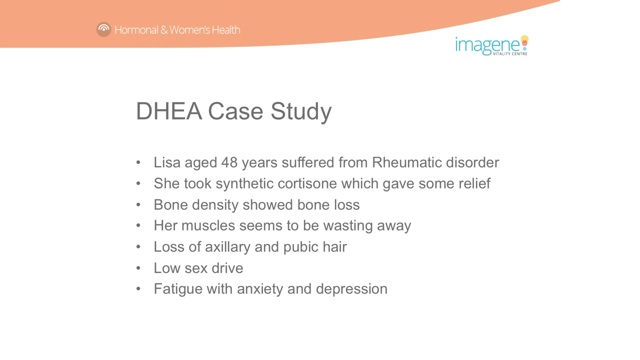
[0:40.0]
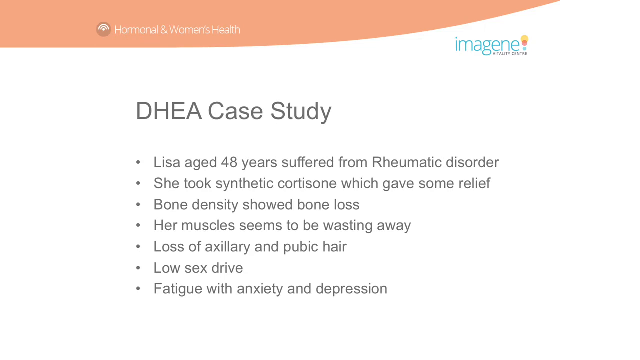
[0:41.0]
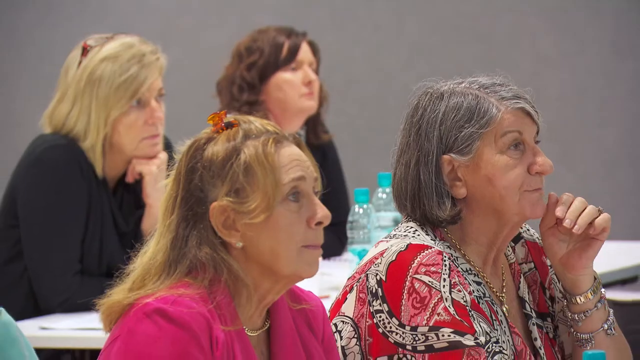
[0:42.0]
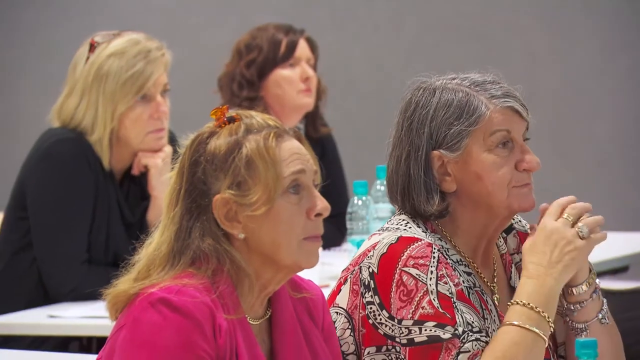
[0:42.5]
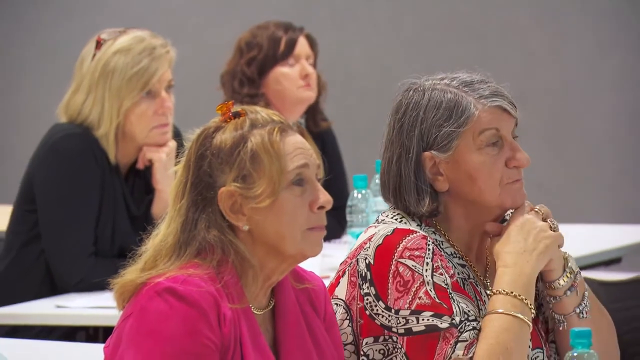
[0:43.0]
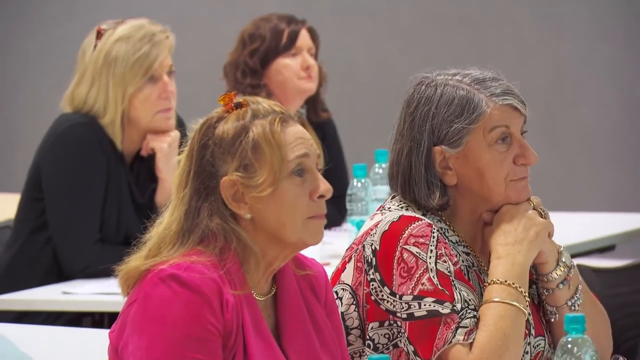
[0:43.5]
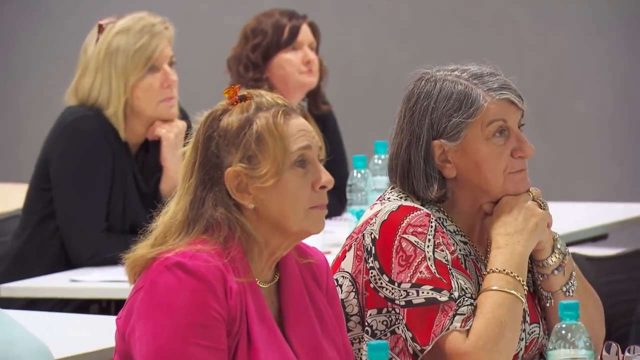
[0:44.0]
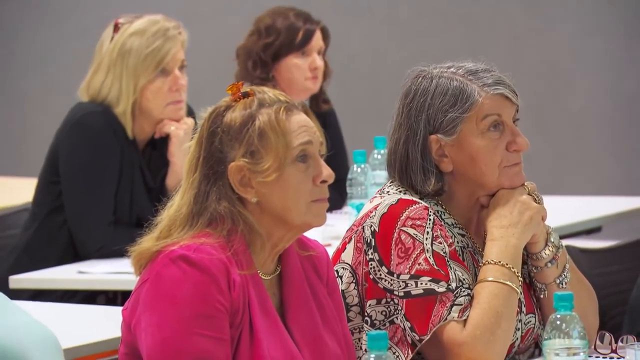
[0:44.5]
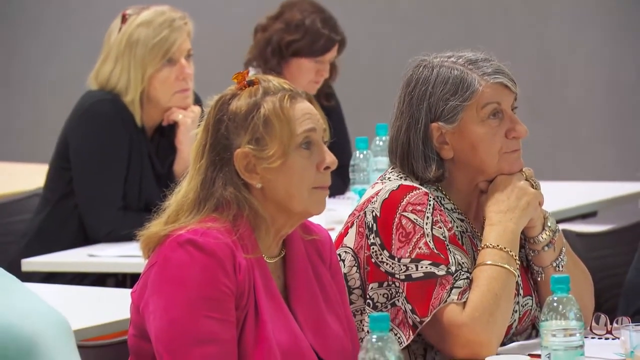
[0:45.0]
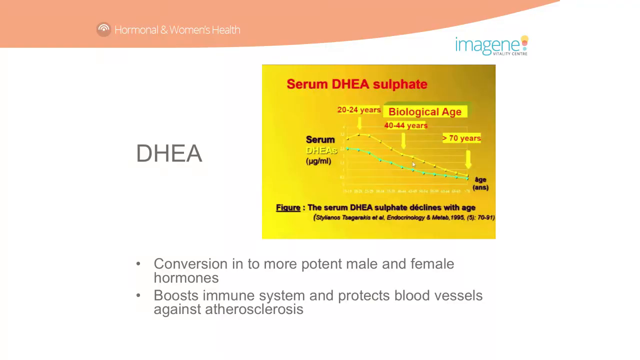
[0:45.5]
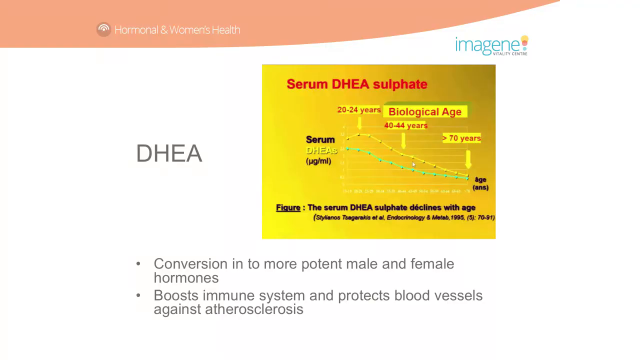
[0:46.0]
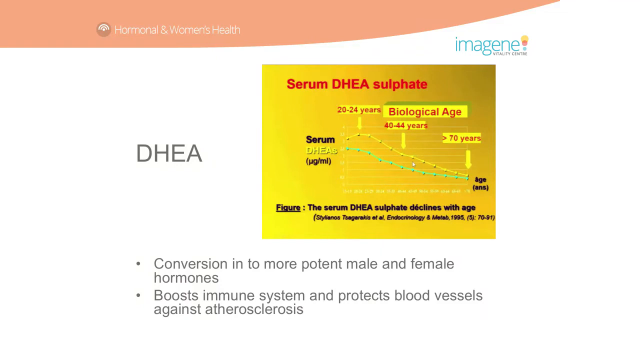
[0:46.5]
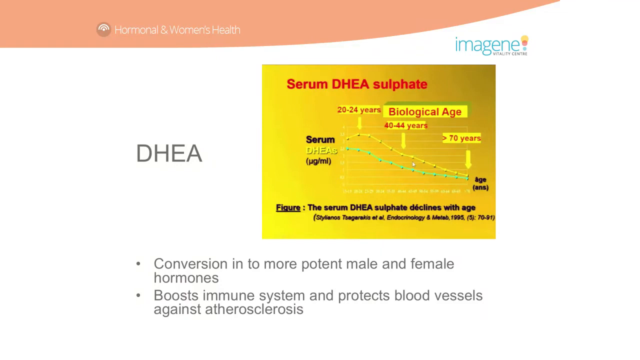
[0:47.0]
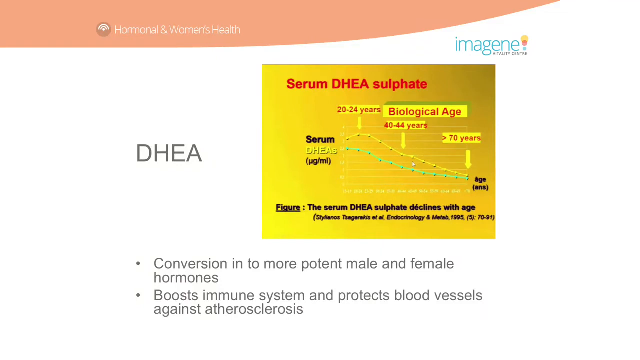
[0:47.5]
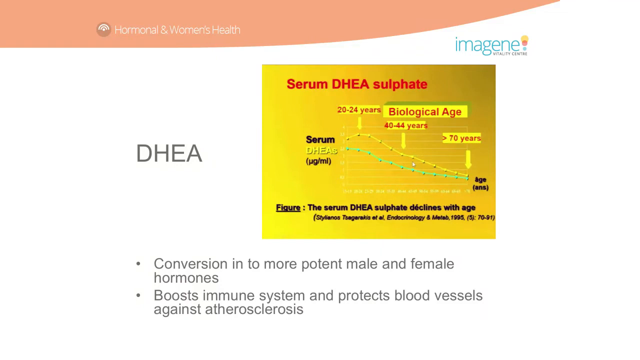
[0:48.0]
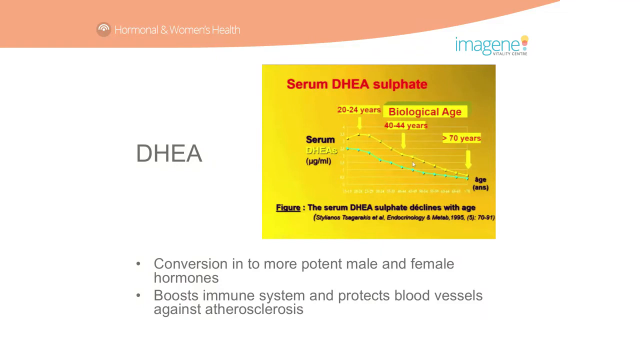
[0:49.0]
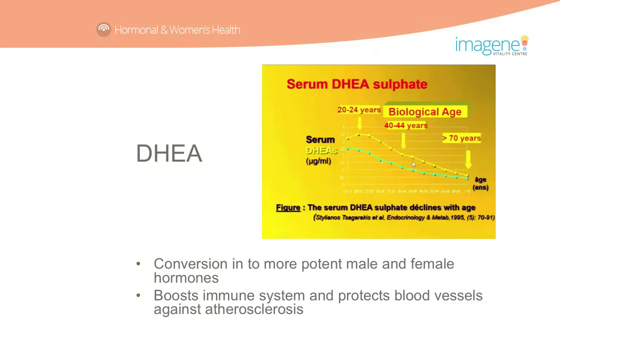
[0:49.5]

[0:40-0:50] The "DHEA case study" slide is still shown on a white background, with its bullet points: "Lisa, age 48, suffered from rheumatic disorder", "she took synthetic cortisone, which gave some relief", "bone density showed bone loss", "muscles seem to be wasting away", and one about feeling fatigued and having depression. Women are in the audience of this medical presentation; only women are visible. Then a rectangle pops up reading "serum DHEA sulfate", along with "boosts immune system" and "protects blood vessels".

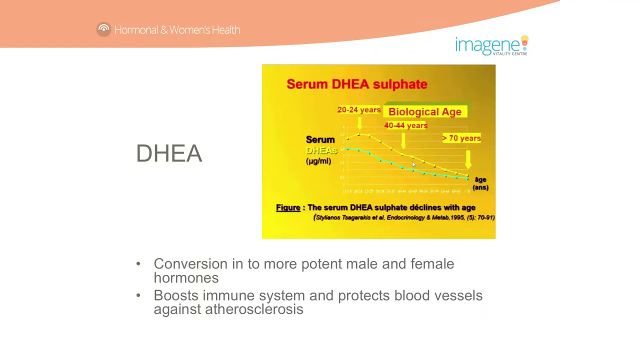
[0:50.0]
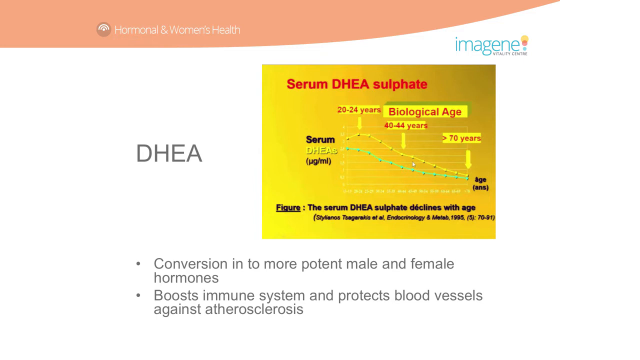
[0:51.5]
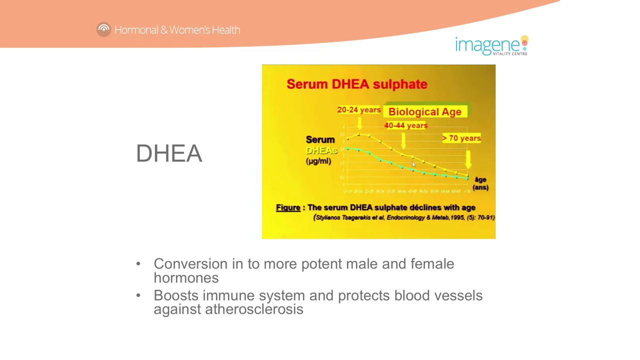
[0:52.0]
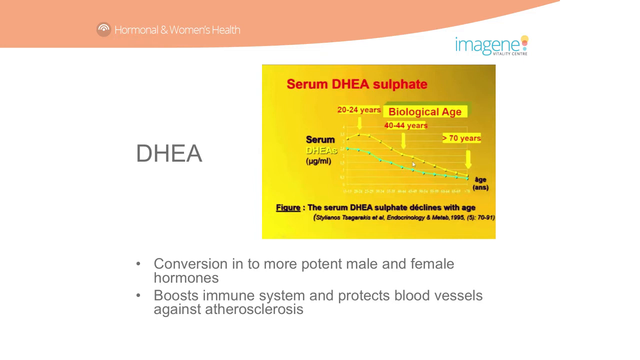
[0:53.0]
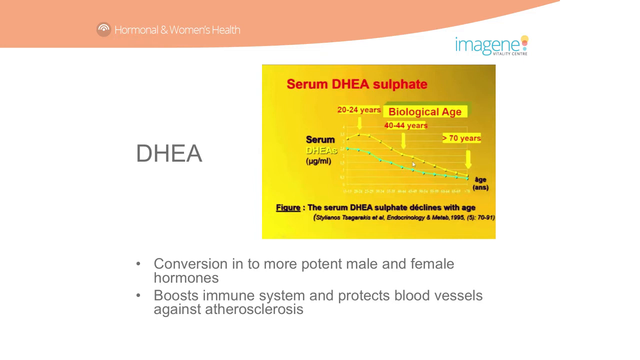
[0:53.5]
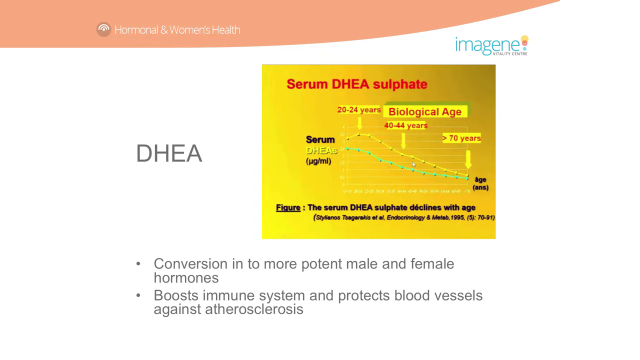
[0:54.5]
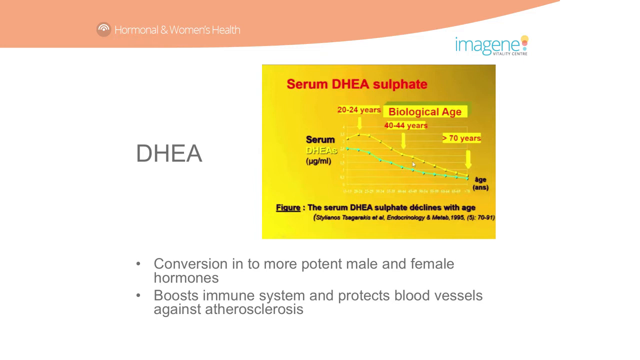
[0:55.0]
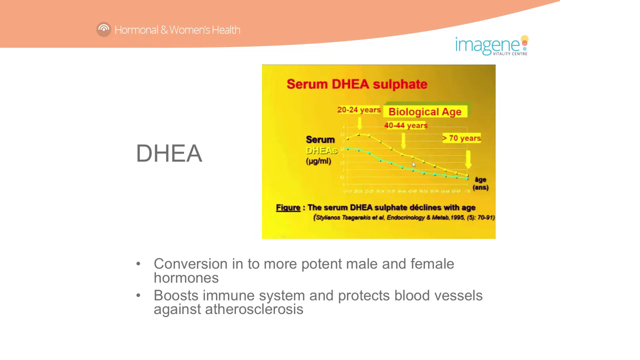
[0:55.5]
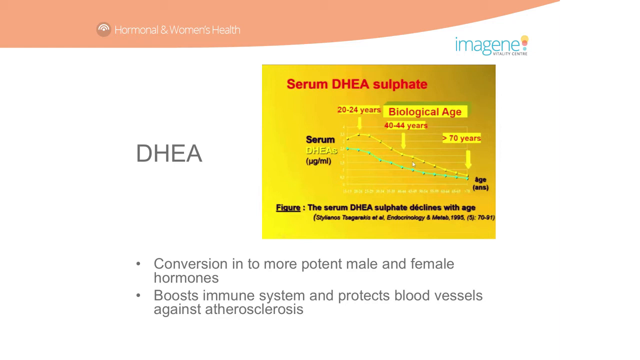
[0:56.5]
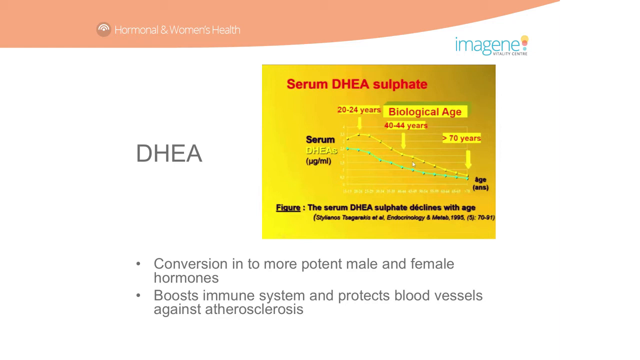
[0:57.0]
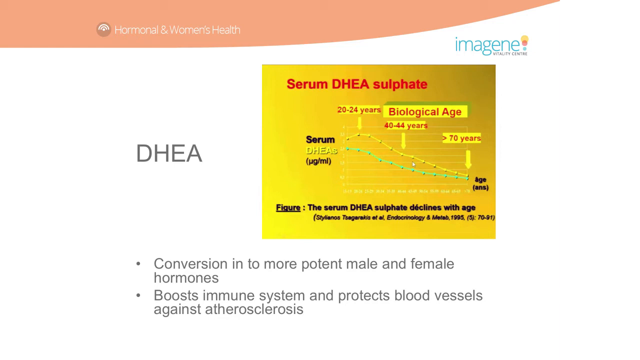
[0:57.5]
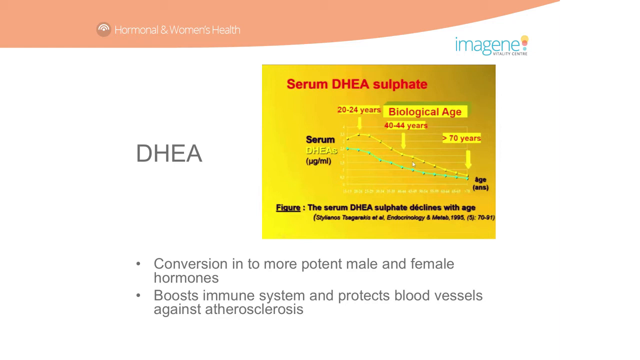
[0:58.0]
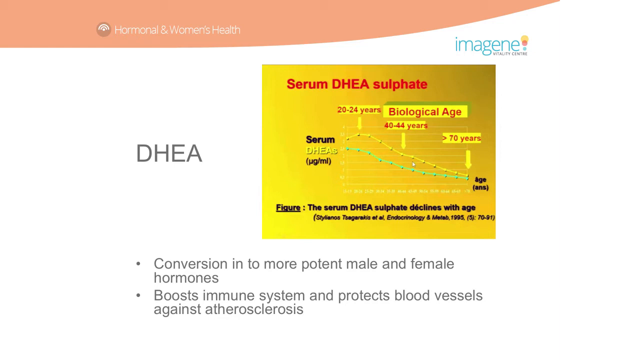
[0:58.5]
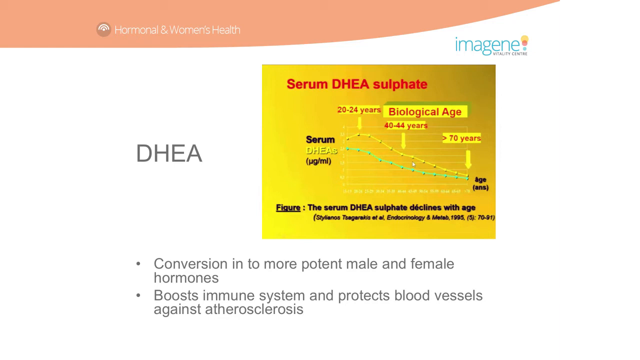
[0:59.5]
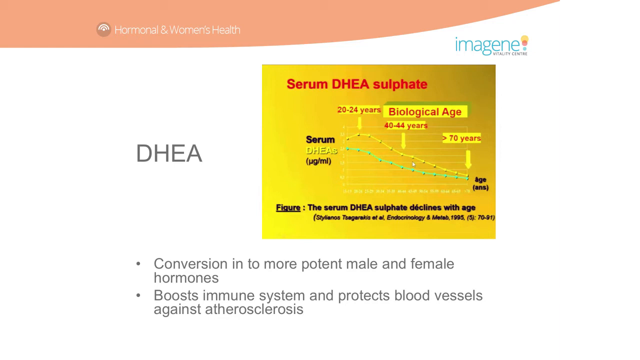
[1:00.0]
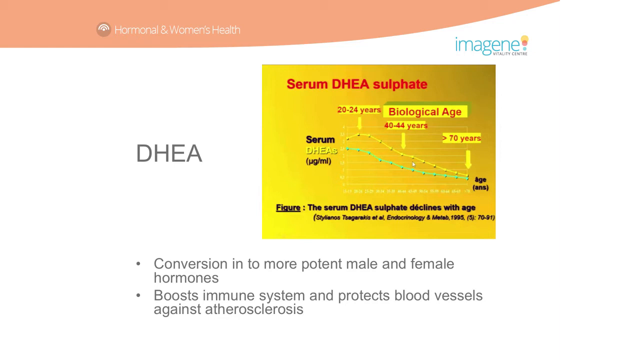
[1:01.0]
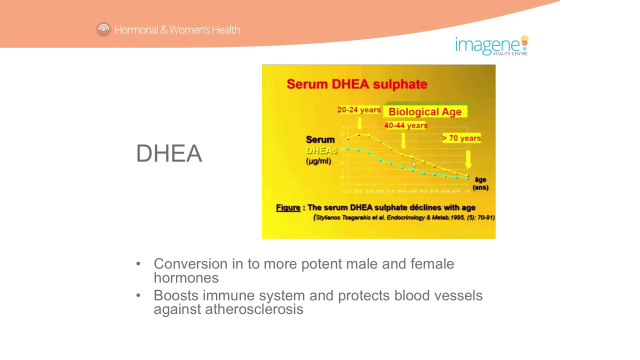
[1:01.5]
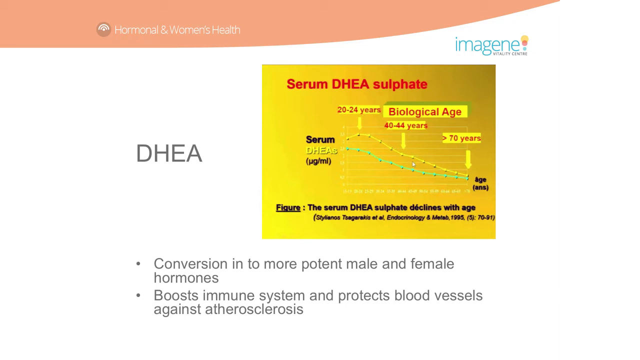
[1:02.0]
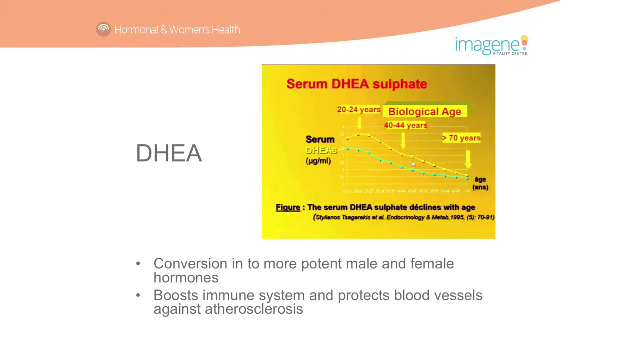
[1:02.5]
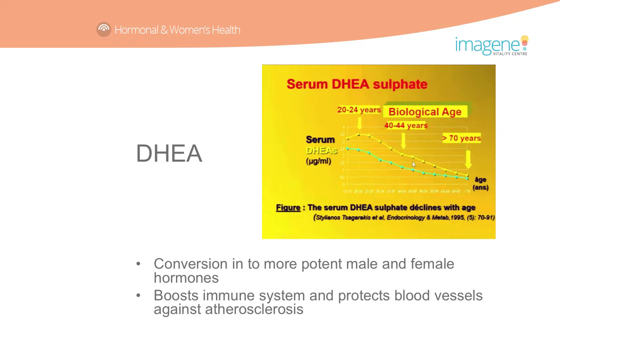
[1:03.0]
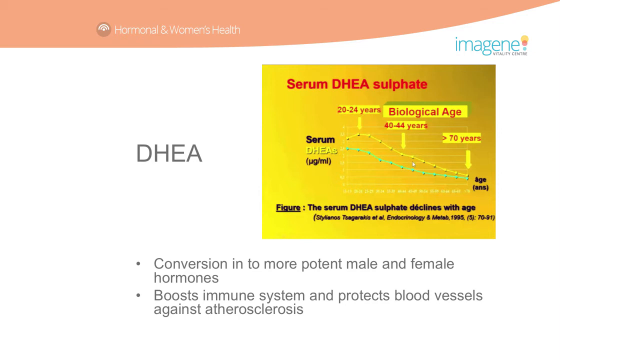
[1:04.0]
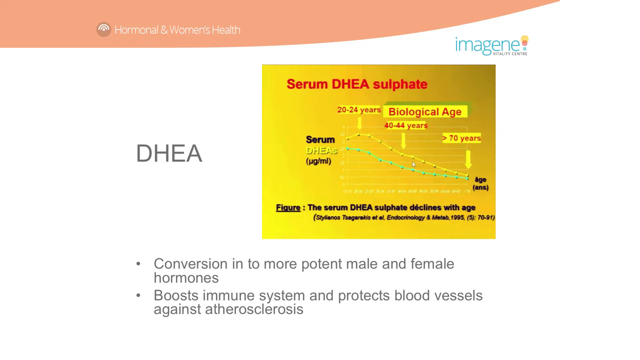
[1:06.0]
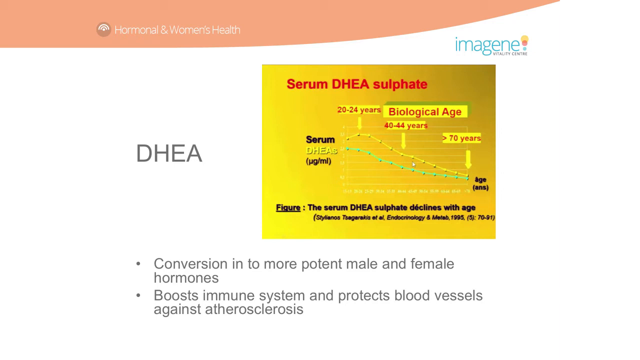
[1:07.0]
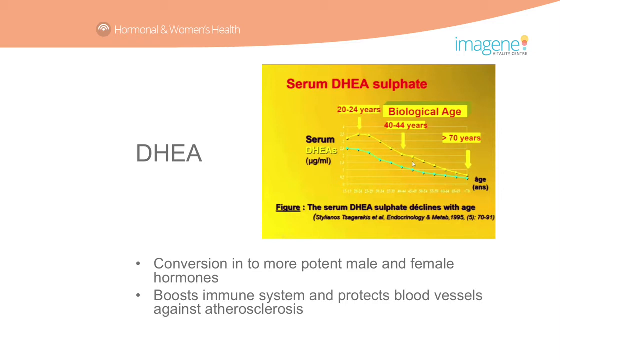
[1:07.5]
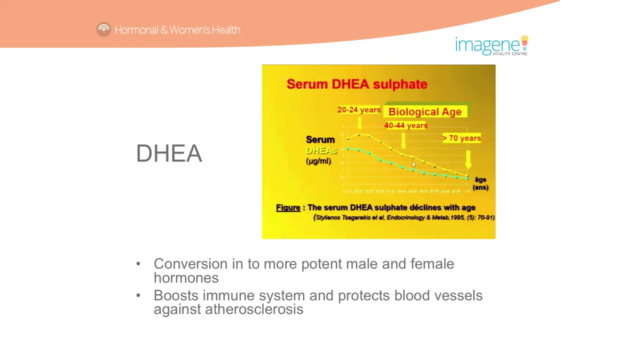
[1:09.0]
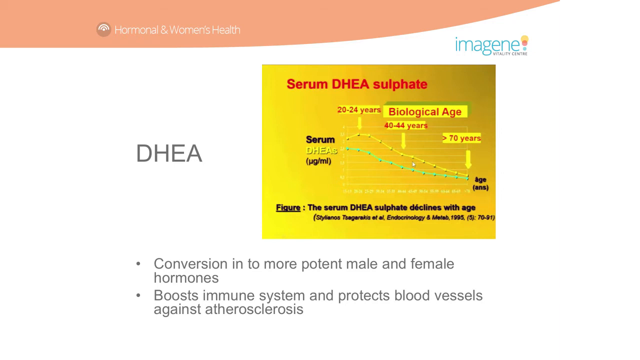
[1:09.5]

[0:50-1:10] The white presentation slide shows "DHEA" on the left side and a yellowish ombre rectangle that goes from light to very dark toward the right. At the top of the rectangle, in red, it reads "serum DHEA sulfate"; it is a graph. Some words in black or mustard are hard to see. In red are "20-24 years old", "biological age", "40-40 years old", and then an arrow with text about higher than 70 years old. This image stays up for quite some time. Underneath are "conversion into more potent male and female hormones" and "boosting immune system and protects blood vessels against atherosclerosis".